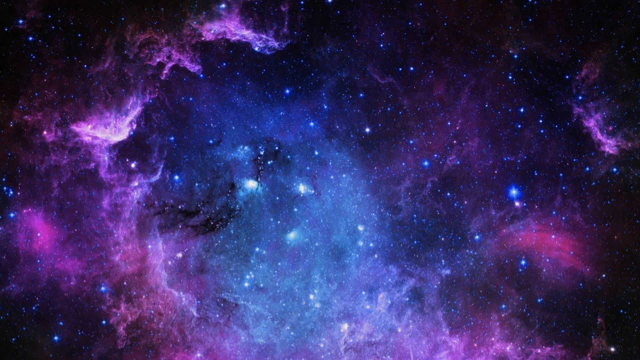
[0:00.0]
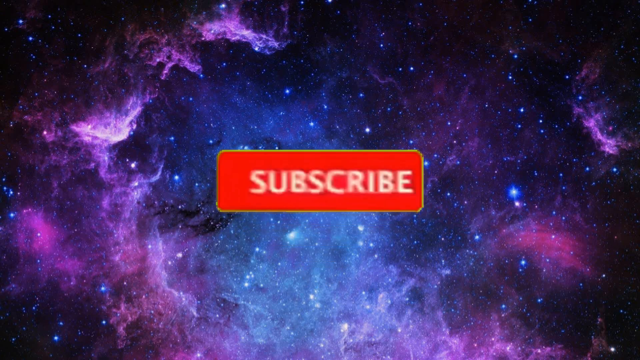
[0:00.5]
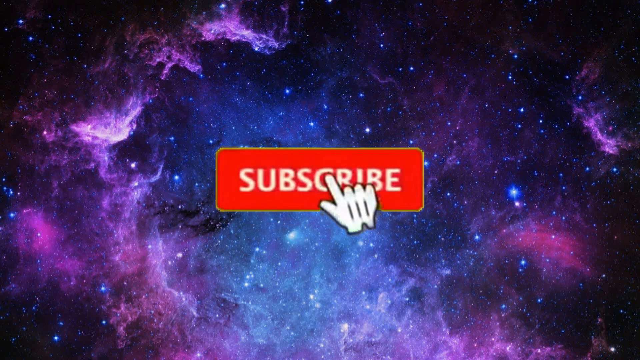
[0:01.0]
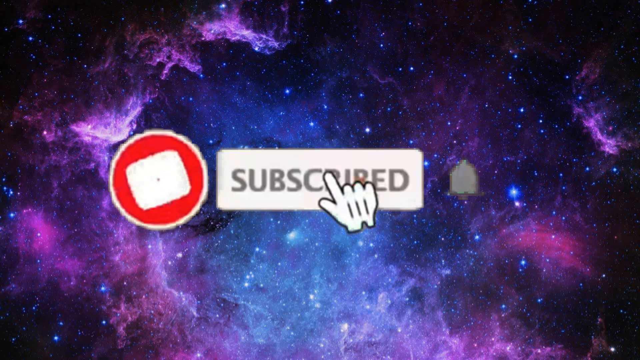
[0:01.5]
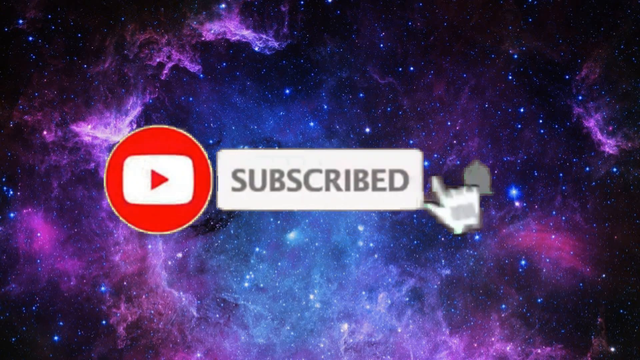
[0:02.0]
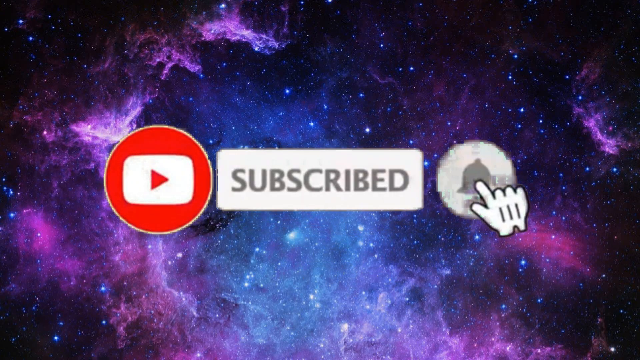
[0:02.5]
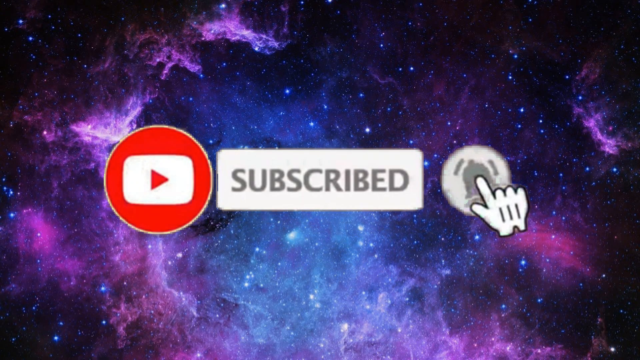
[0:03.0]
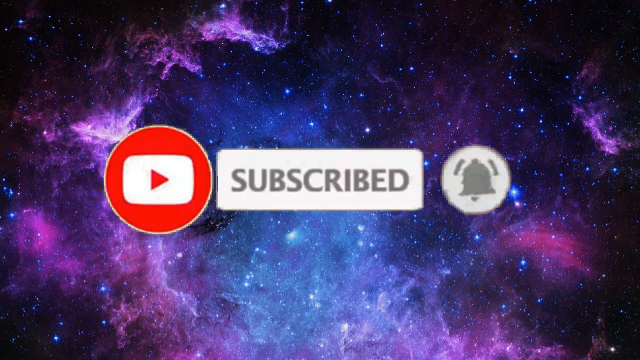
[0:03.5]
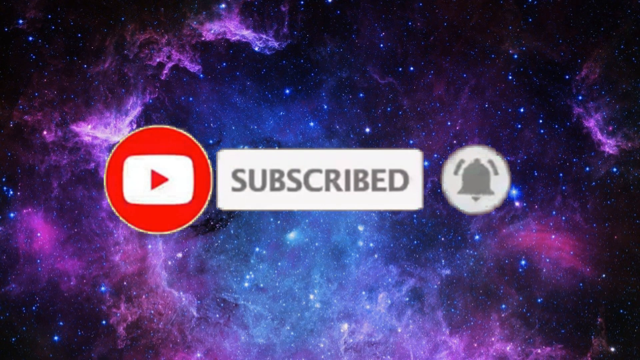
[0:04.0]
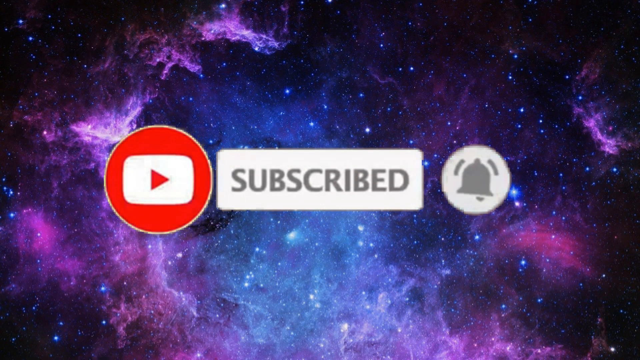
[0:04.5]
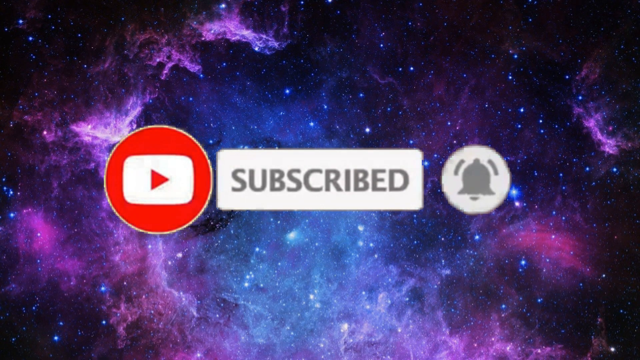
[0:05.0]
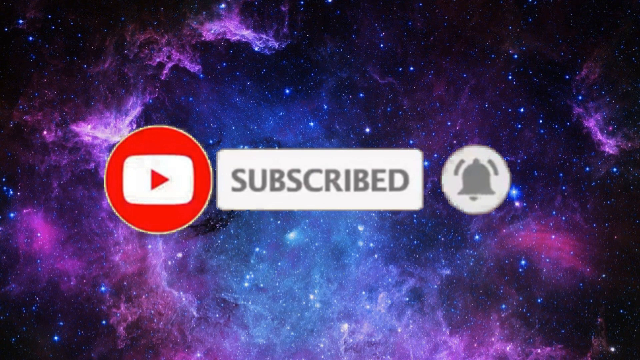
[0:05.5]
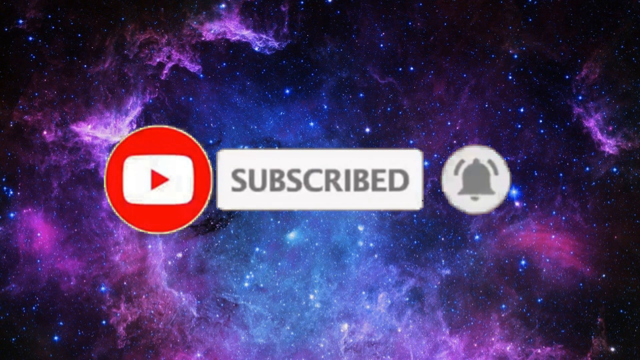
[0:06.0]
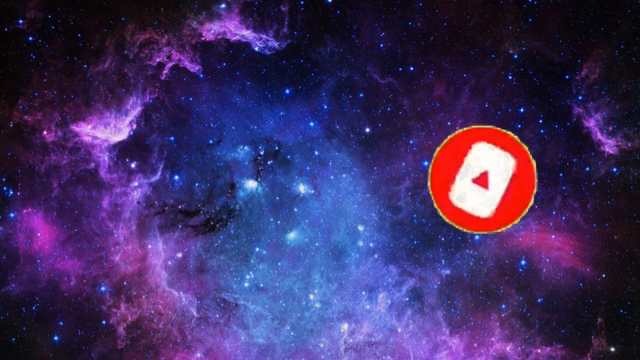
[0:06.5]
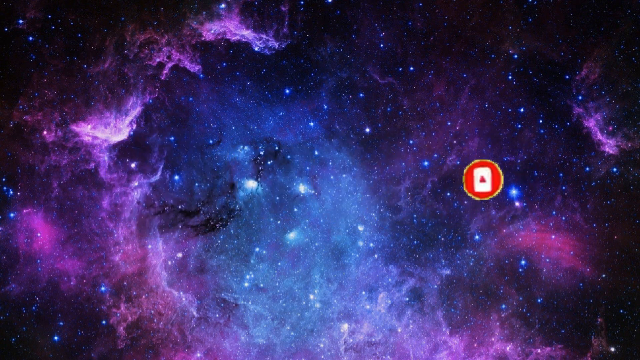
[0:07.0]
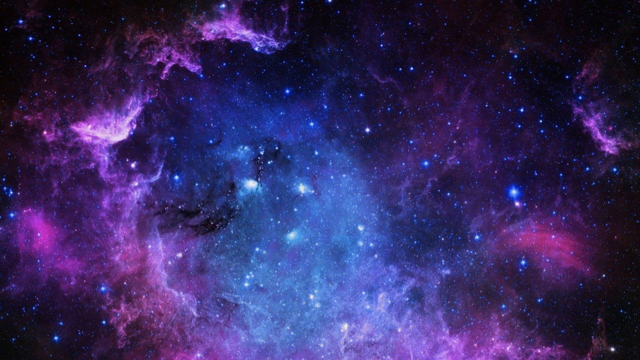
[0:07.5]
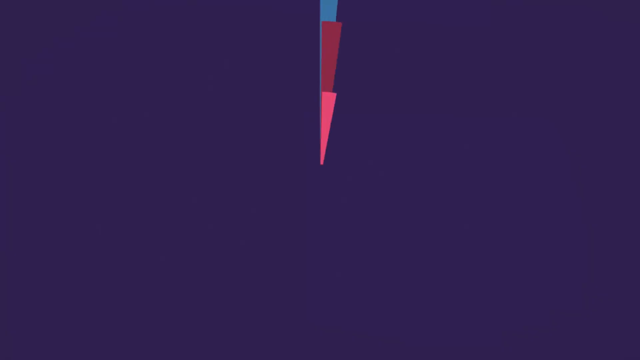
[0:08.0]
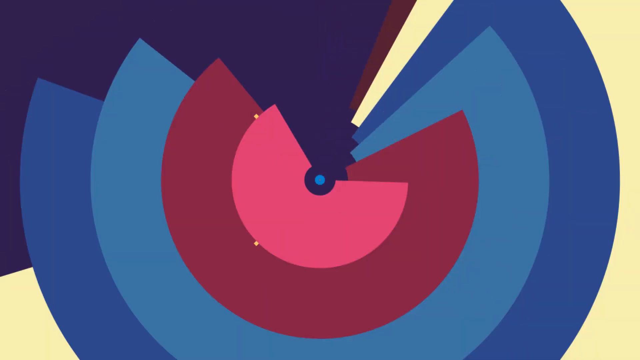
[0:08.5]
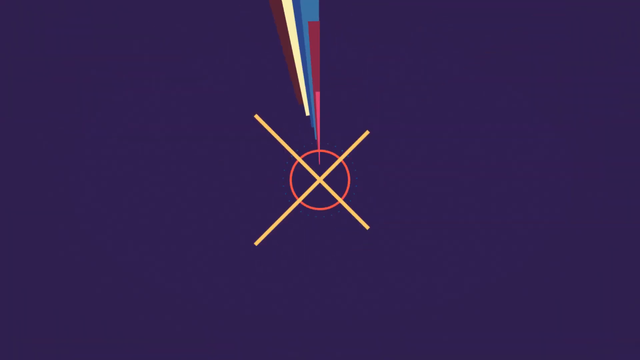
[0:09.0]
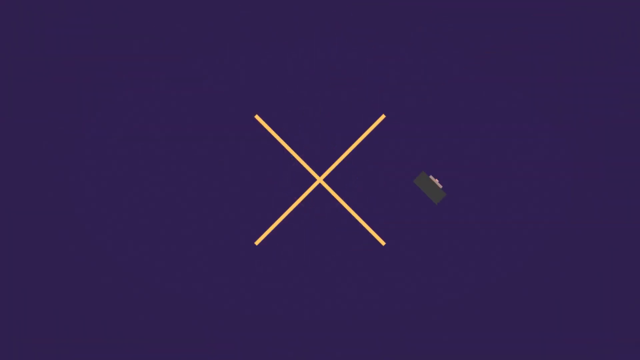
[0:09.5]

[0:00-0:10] The video opens on a view of space filled with many bright blue and white stars and shrouded by blue clouds. A YouTube logo pops up along with a YouTube subscribe button and a bell, with a hand hovering over the bell button. The YouTube logo then collapses into what seems to be the introduction of a YouTube channel, made of shapes in many different sizes, including triangles and squares, in many colors such as yellow, blue, red and green as it unfolds.